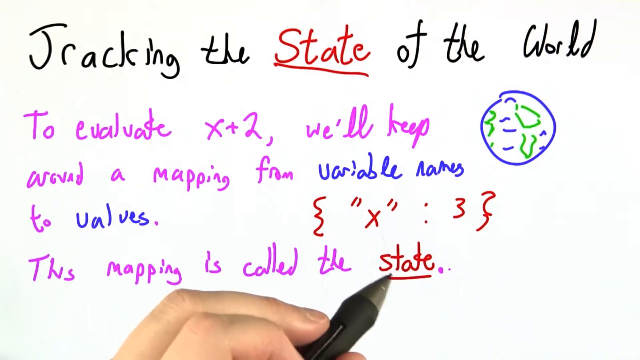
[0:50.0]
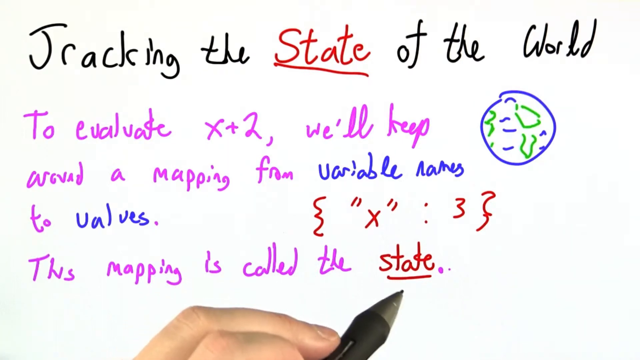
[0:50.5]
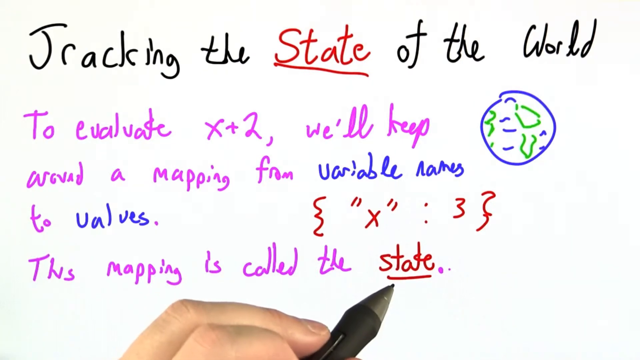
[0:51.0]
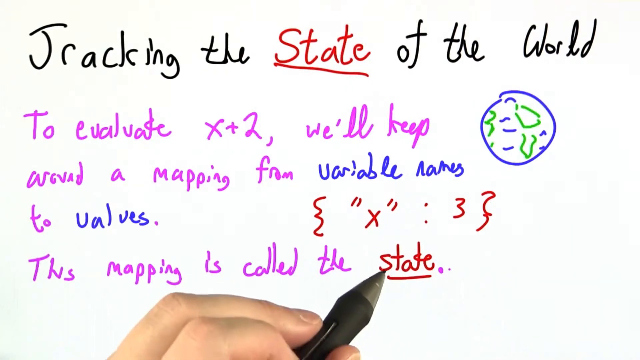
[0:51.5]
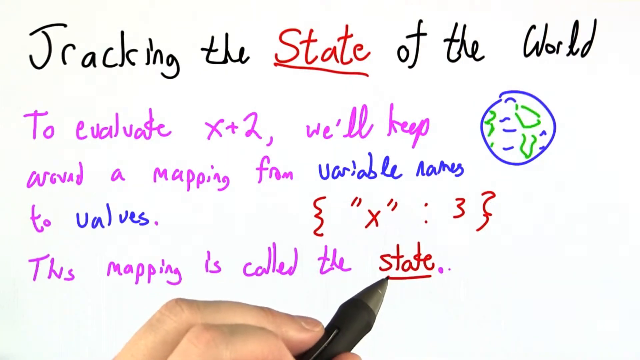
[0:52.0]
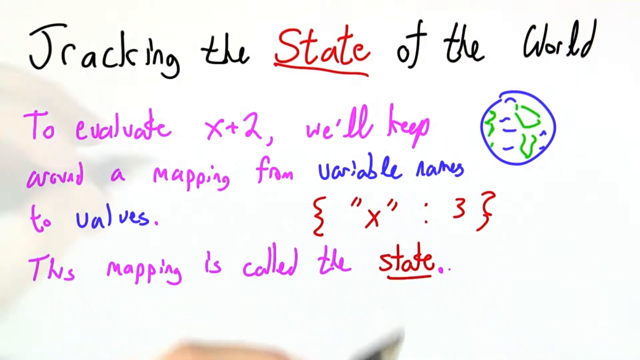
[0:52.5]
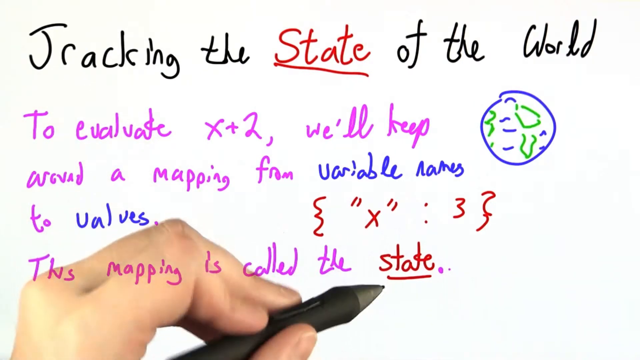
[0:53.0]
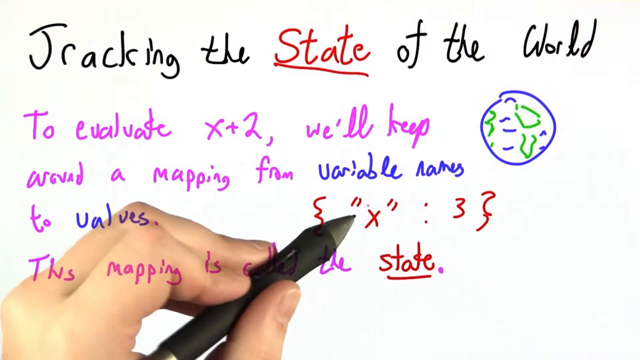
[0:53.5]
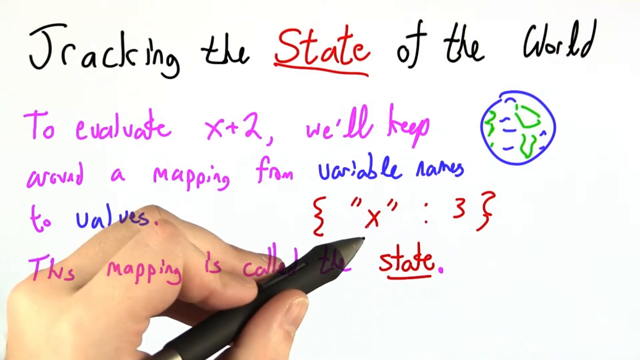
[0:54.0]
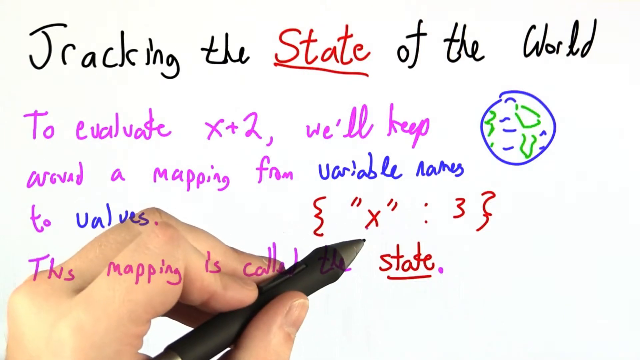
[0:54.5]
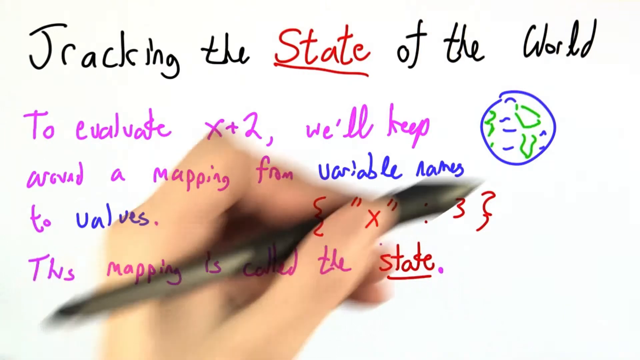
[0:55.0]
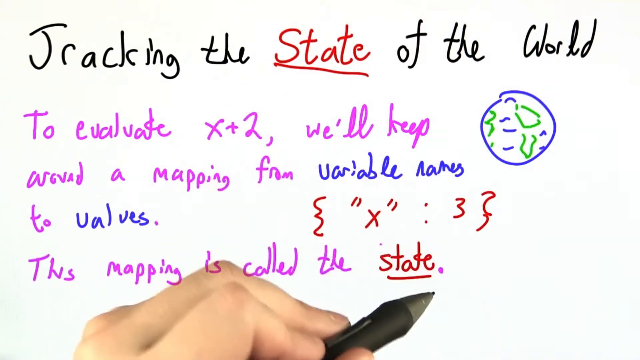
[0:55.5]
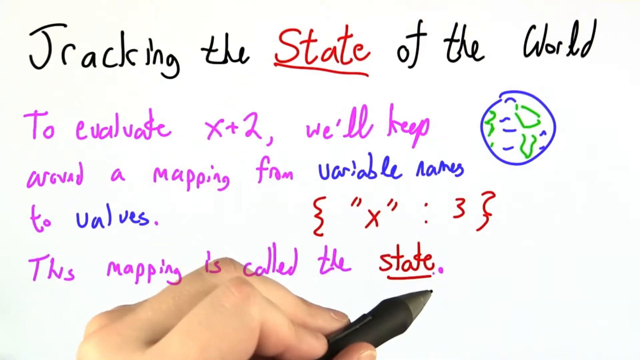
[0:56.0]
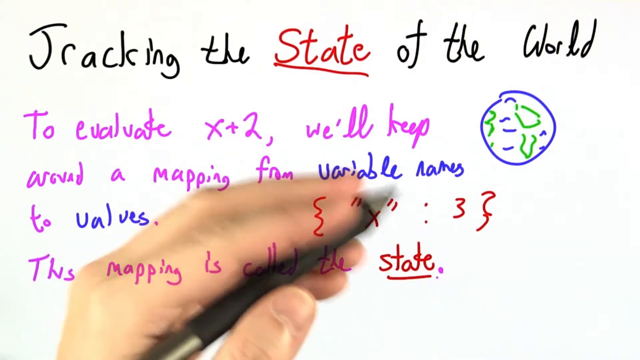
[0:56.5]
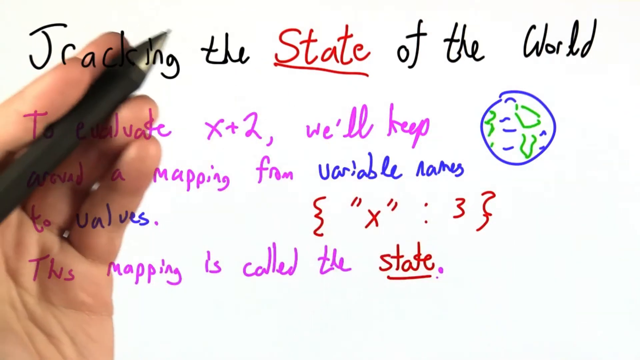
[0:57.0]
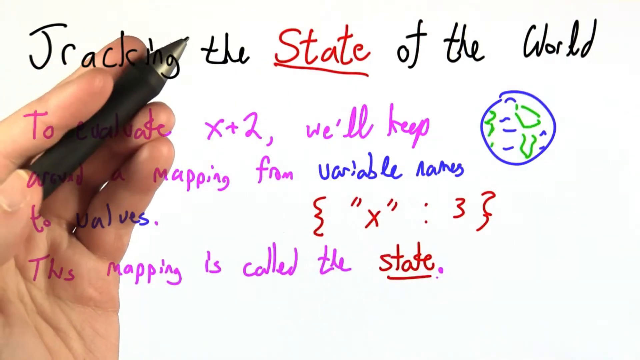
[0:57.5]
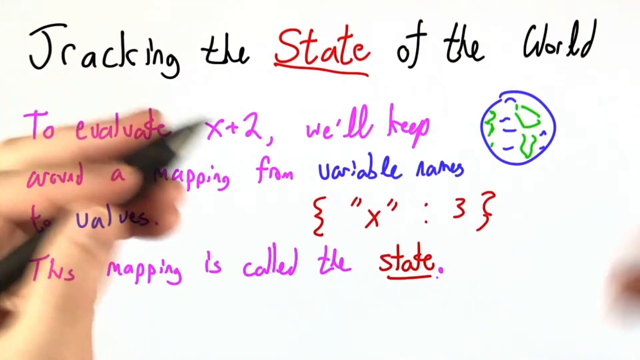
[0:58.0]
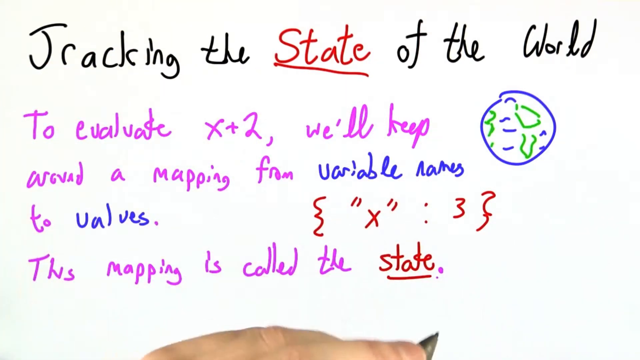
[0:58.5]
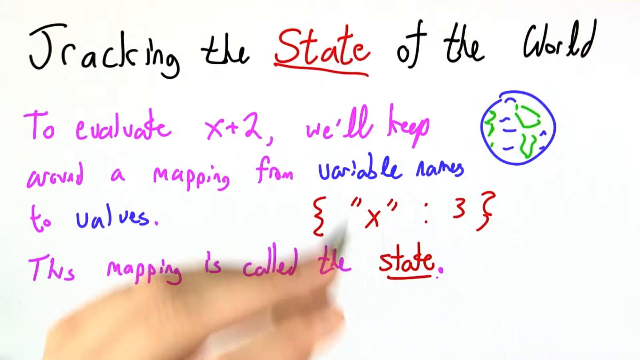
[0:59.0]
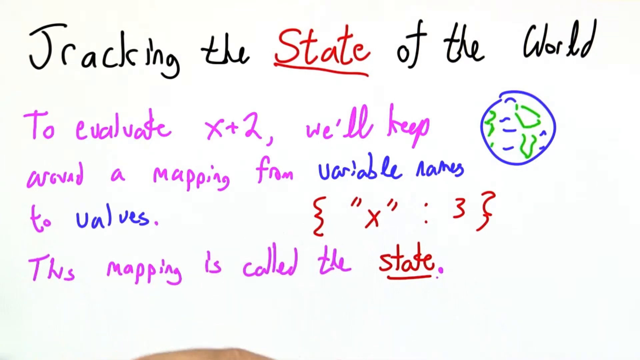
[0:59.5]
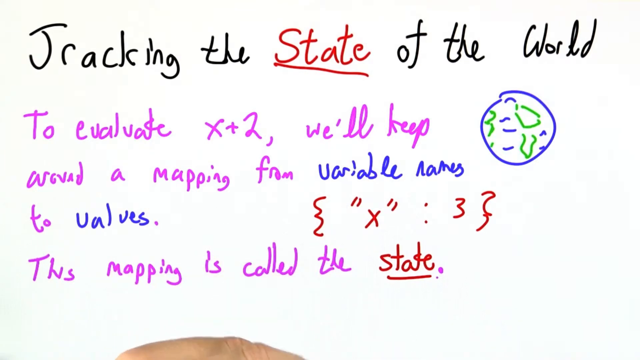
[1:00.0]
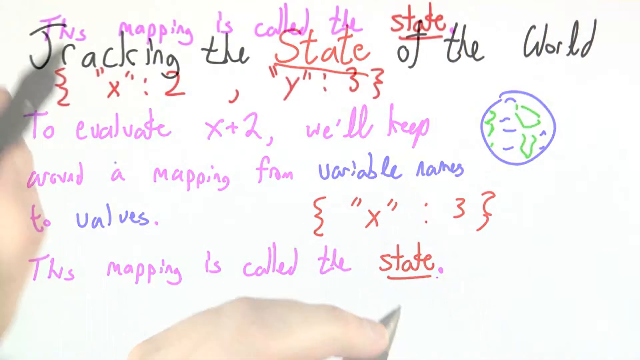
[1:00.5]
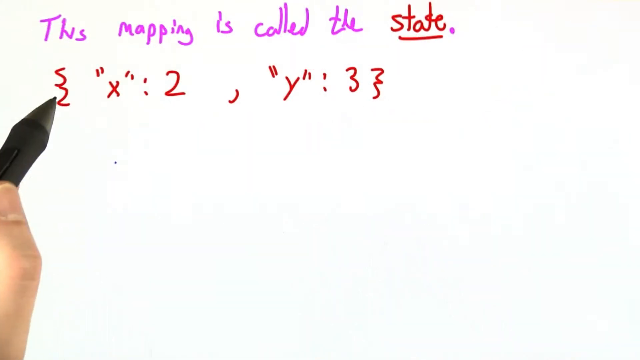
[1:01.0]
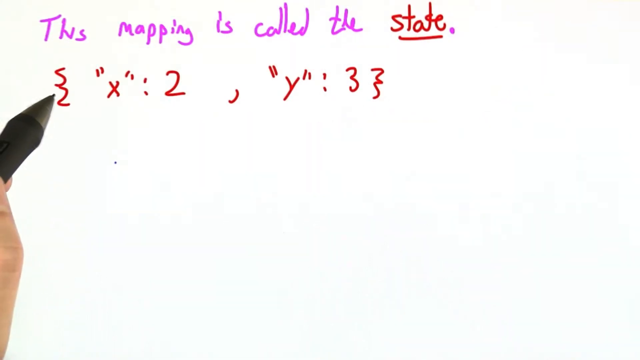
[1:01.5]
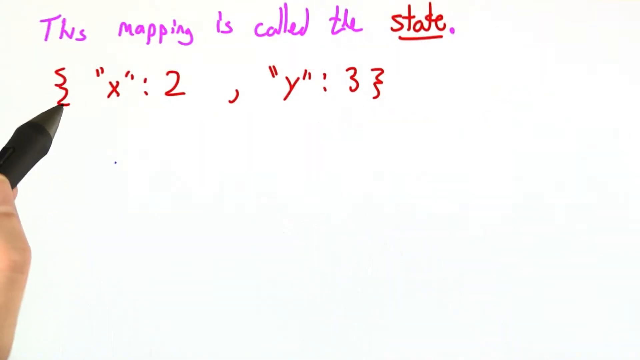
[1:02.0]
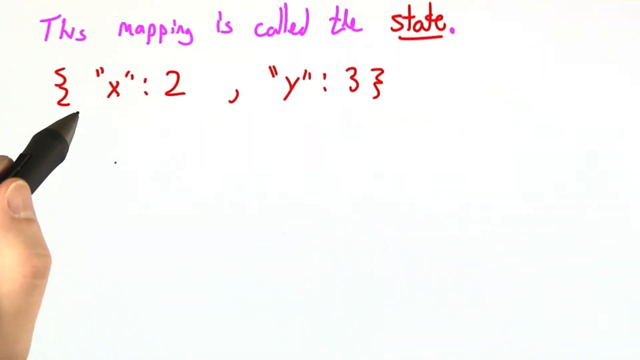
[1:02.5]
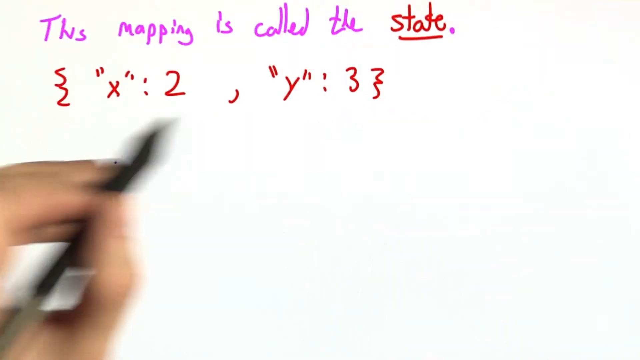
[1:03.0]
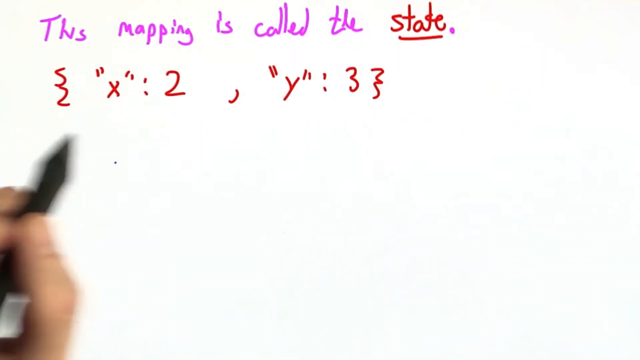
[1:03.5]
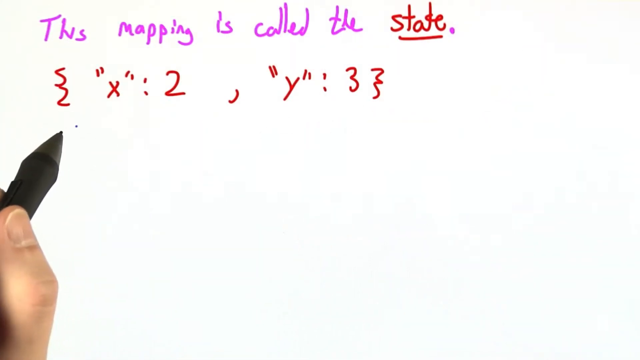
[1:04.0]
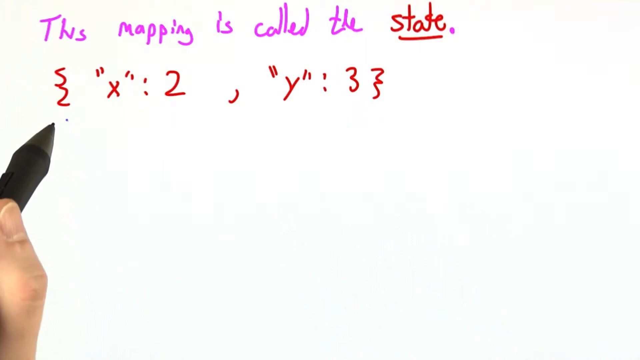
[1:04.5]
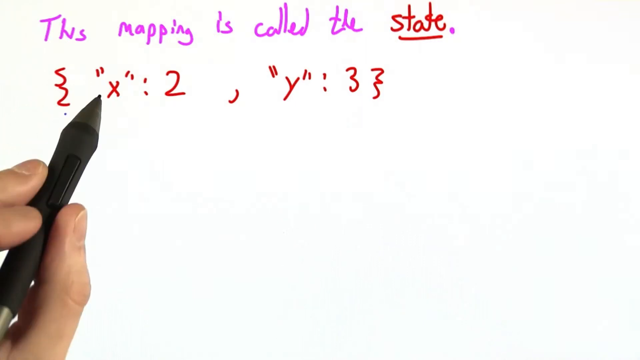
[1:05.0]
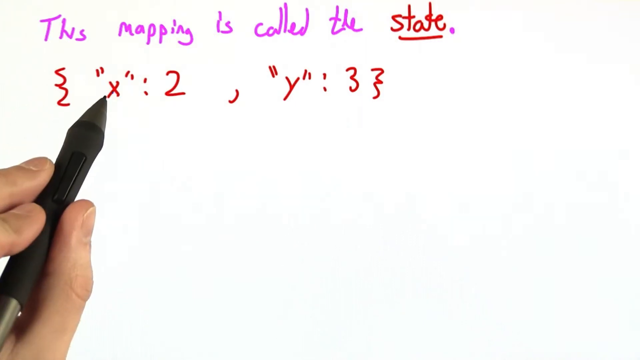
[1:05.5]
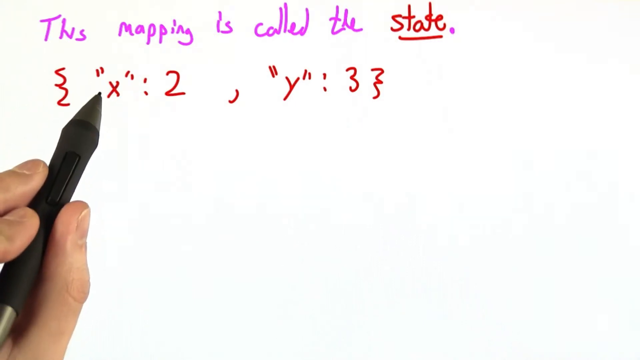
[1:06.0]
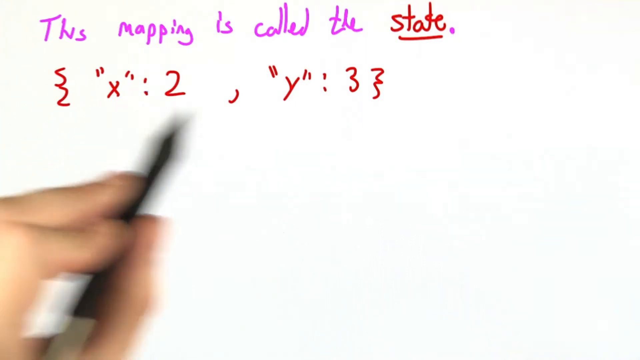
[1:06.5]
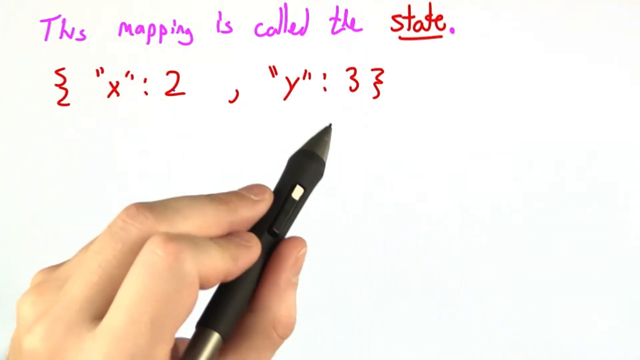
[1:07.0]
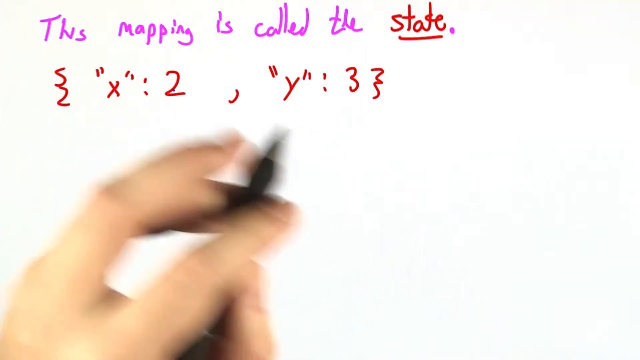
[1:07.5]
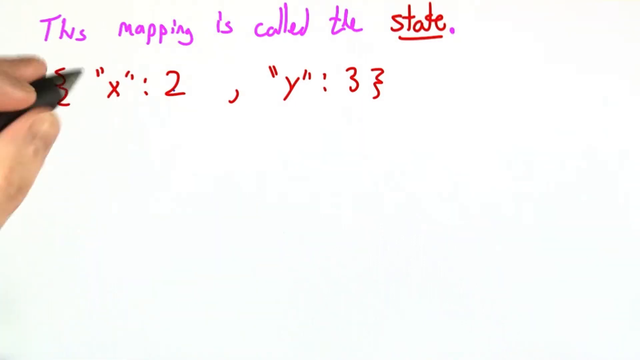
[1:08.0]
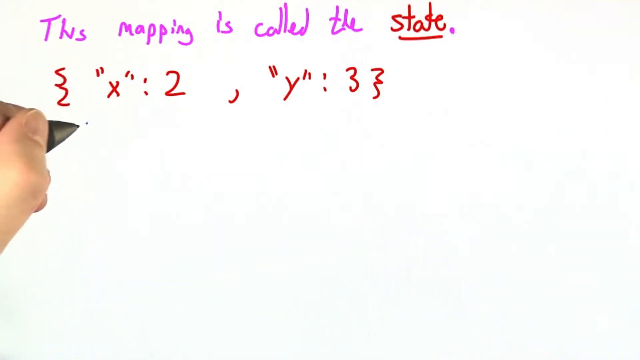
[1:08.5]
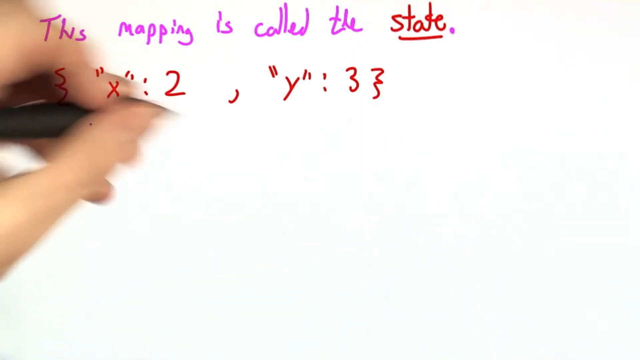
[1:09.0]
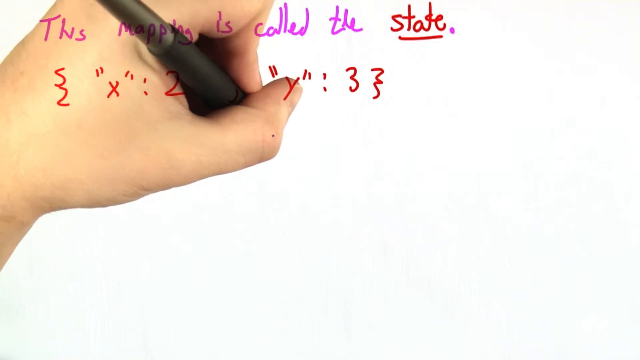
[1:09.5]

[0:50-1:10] The person continues to point to words in the written text while gesticulating with both hands, both of which are visible at various points. Moving to another part of the screen, they write within parentheses "x equals 2, y equals 3", separated by a comma, in red ink. Below those two values, they write "x times y equals 6" in blue ink.